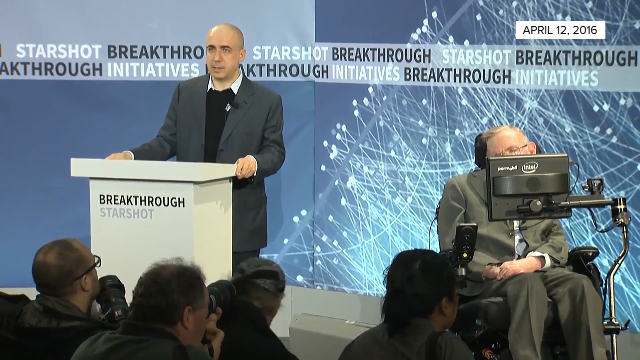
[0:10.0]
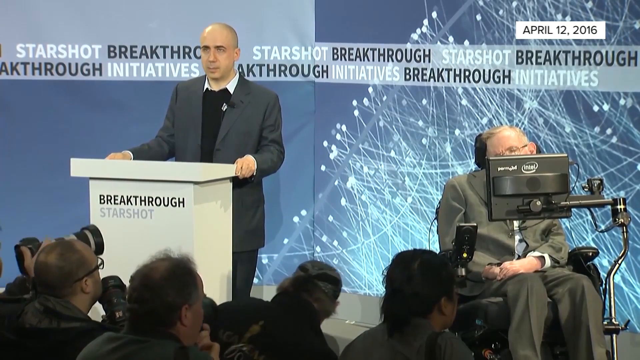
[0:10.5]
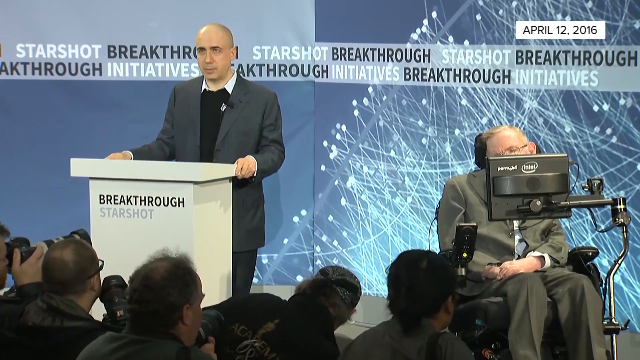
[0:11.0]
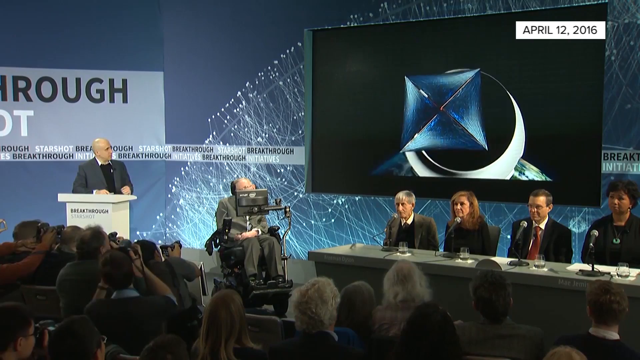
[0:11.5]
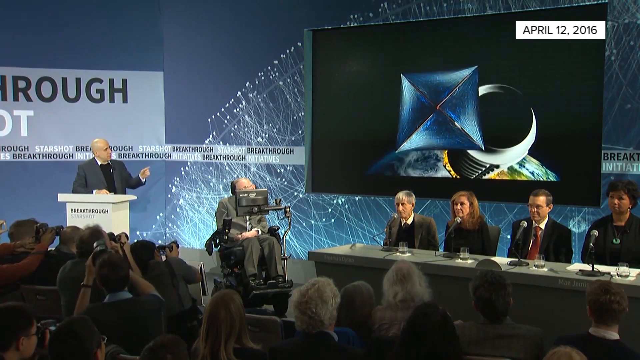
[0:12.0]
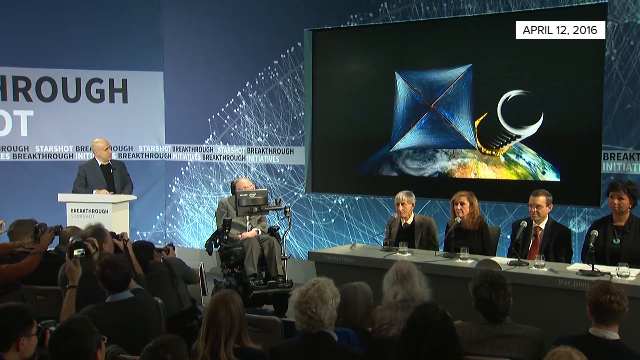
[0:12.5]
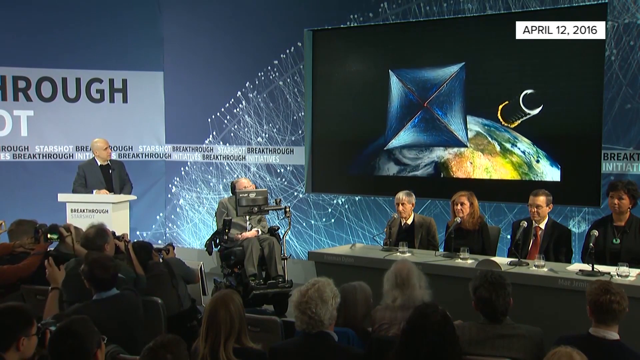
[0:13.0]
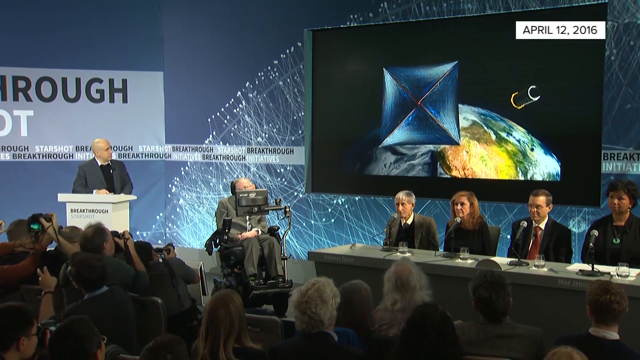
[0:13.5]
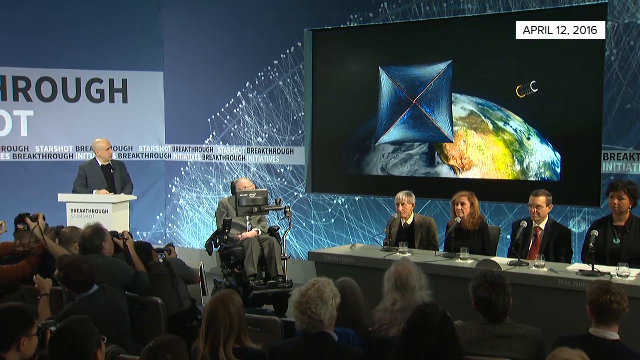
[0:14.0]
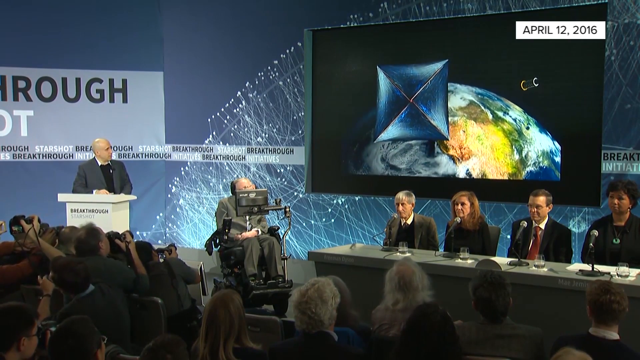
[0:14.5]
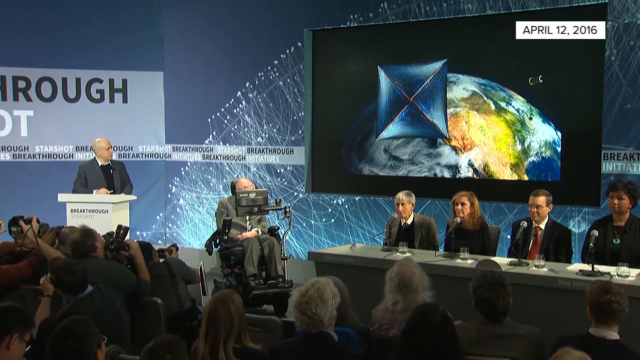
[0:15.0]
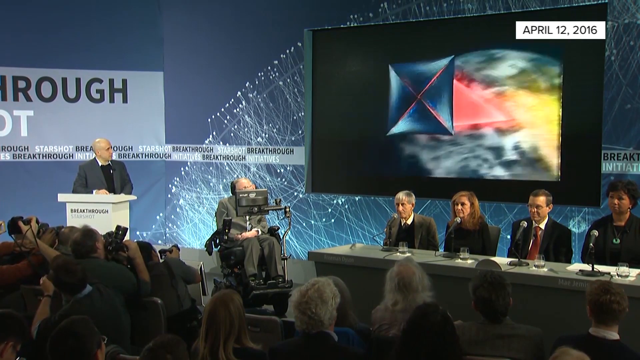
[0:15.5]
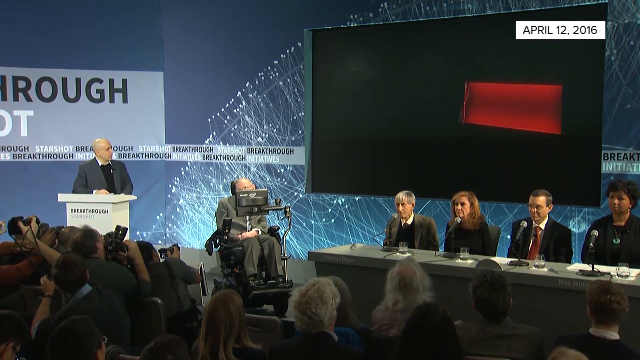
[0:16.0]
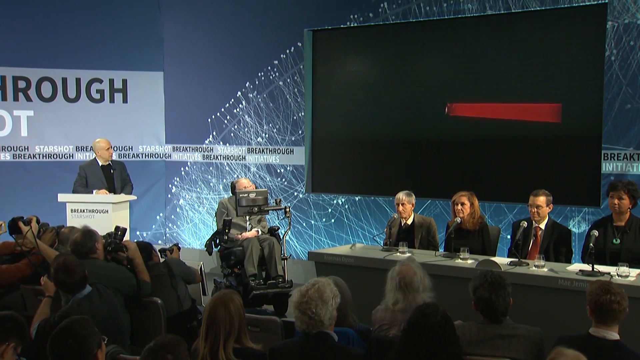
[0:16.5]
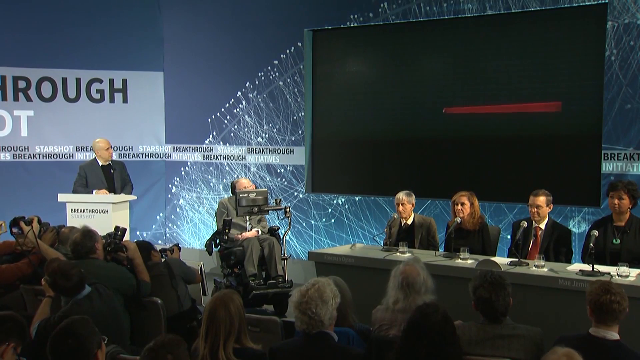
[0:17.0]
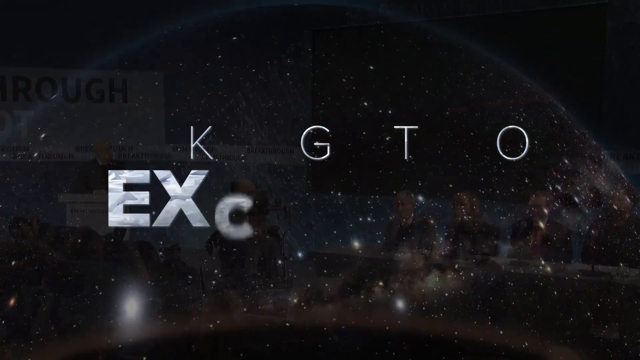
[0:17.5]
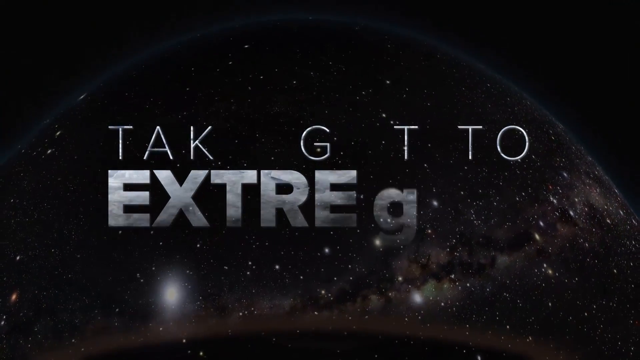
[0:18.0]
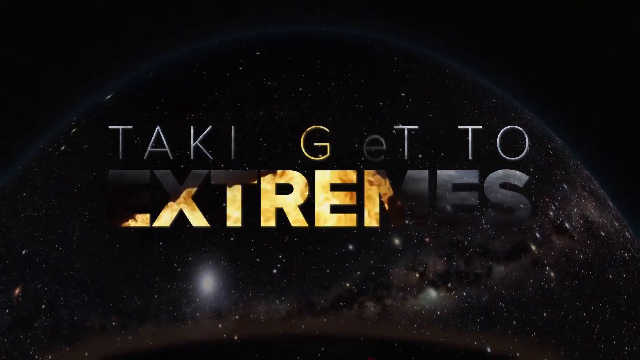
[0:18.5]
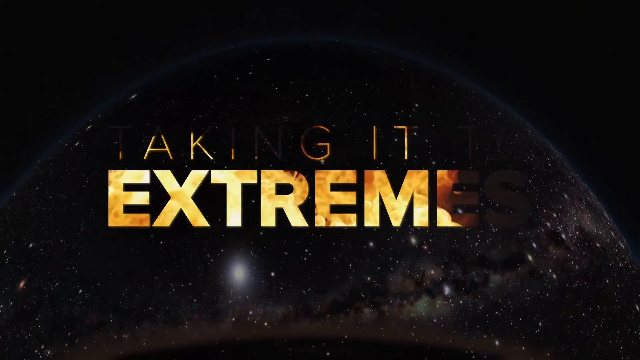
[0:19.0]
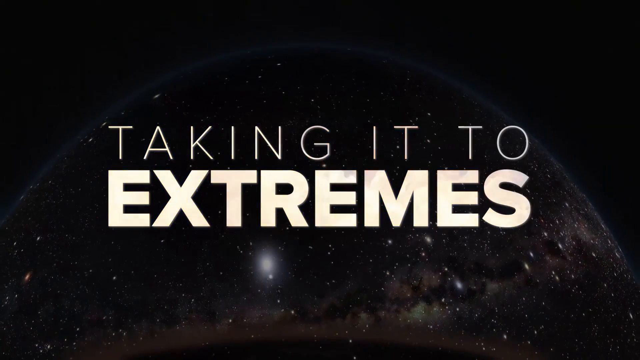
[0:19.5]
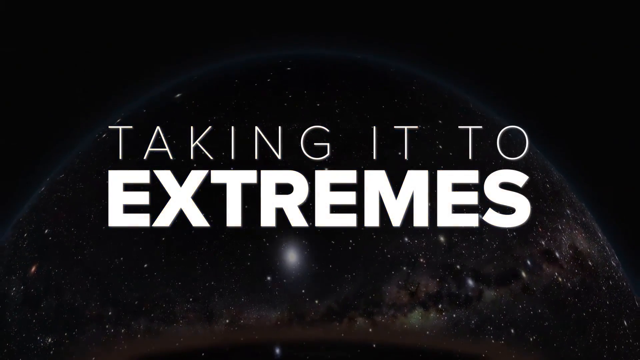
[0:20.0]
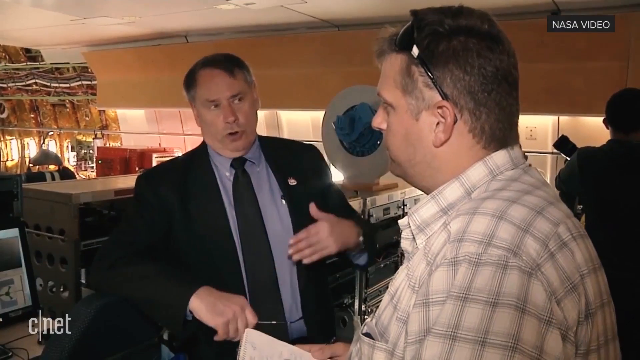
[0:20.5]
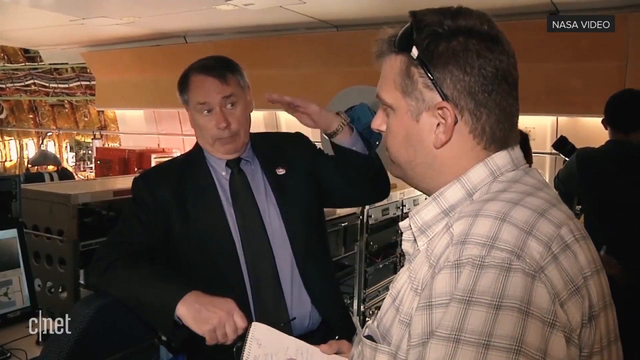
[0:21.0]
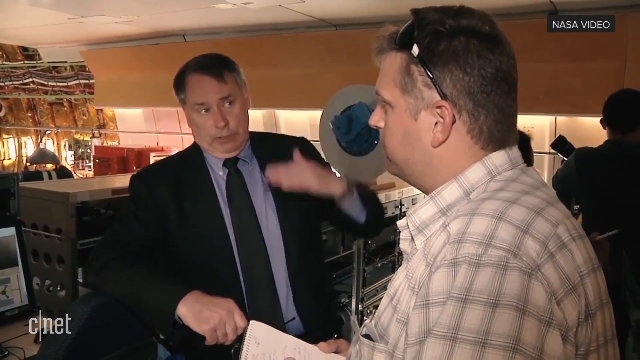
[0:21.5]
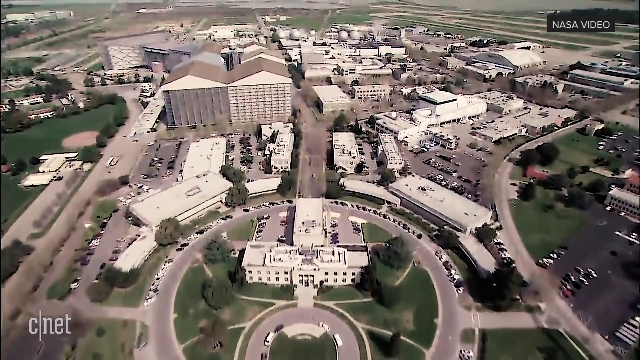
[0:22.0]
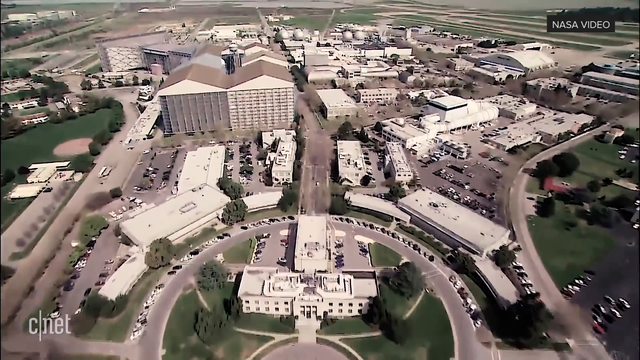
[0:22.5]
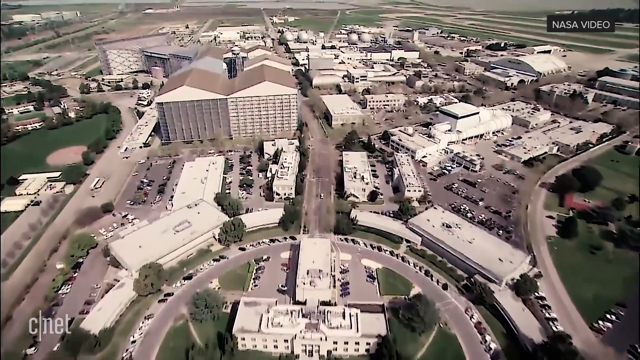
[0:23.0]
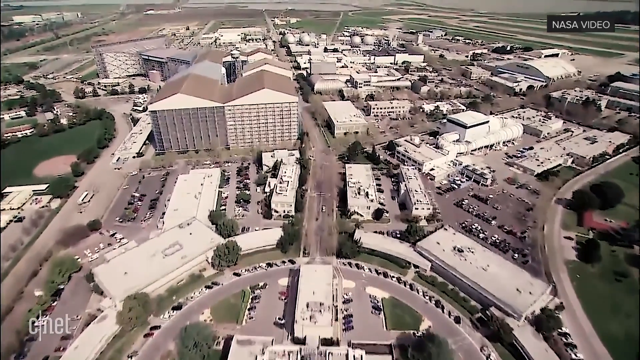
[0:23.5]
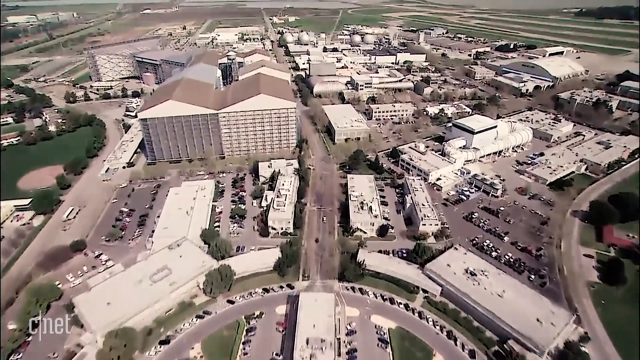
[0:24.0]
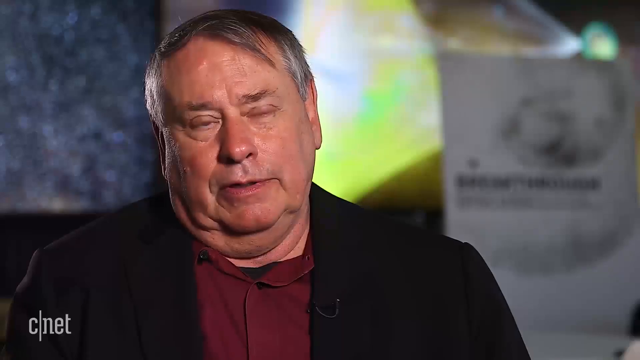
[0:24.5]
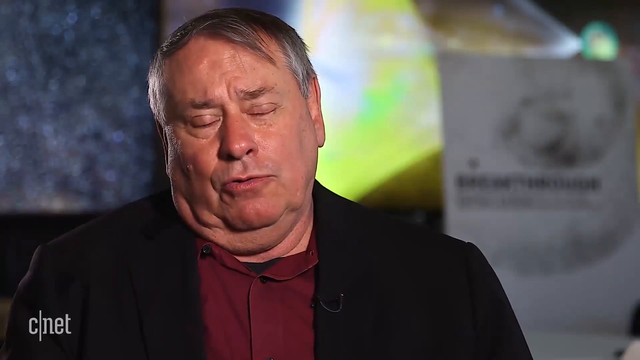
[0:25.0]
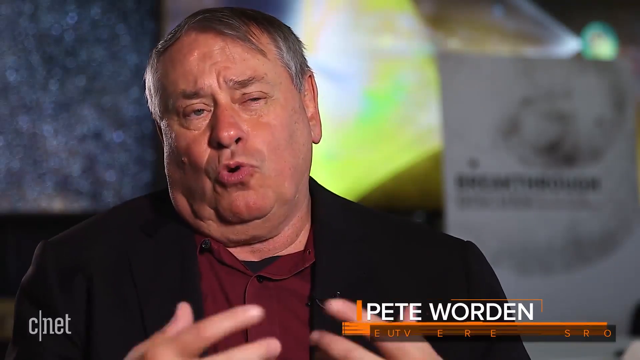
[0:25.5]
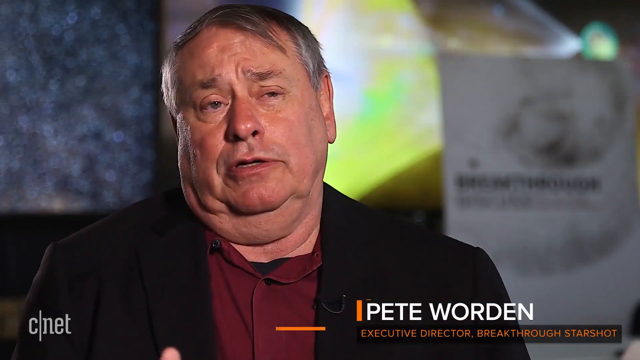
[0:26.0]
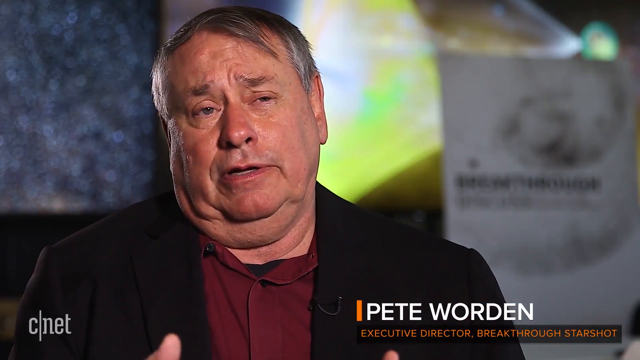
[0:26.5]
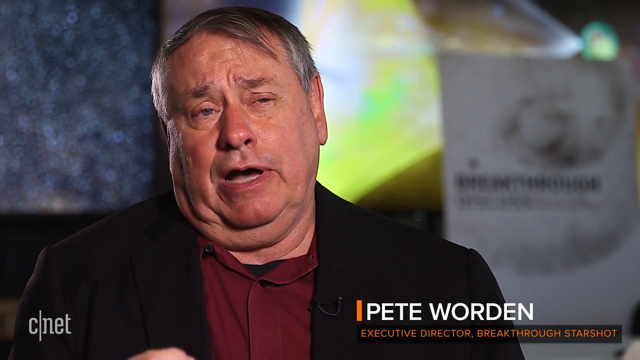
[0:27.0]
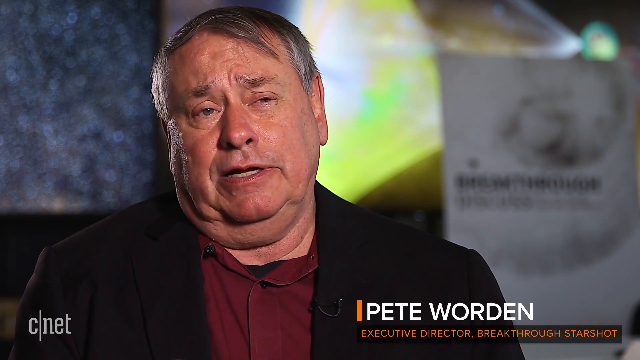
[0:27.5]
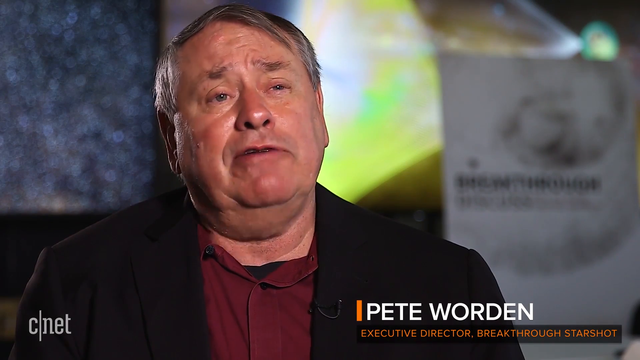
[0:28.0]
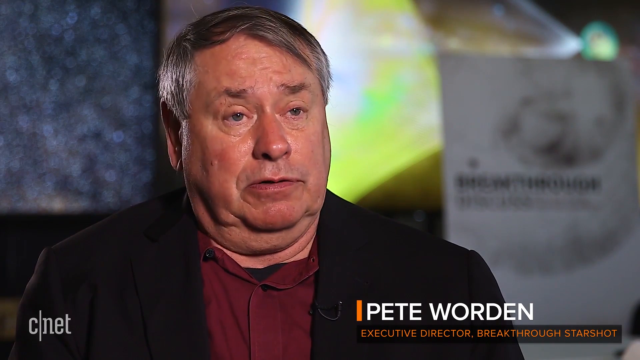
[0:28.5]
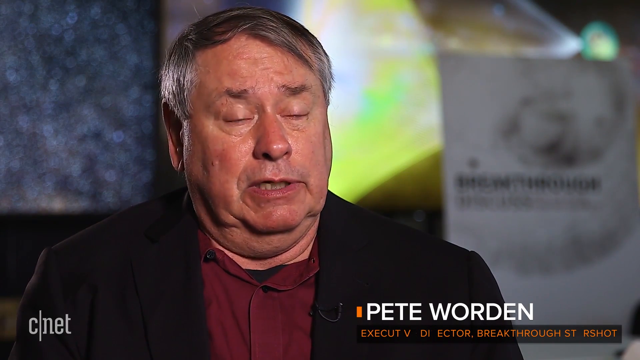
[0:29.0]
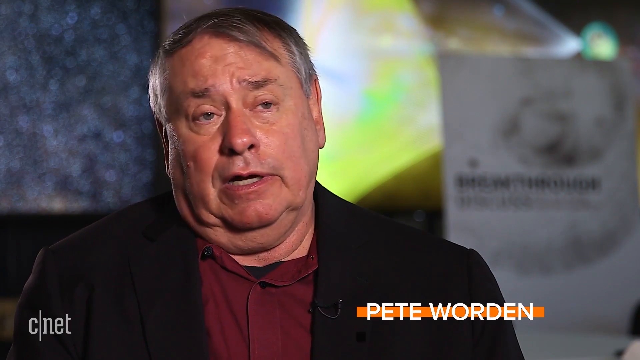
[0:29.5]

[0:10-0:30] The man on the left gives the main presentation, standing behind a podium. The front of the podium reads "Breakthrough Starshot," apparently the company or project name. At the top right, a date reads "April 12, 2016." Behind the people speaking, a presentation or video animation plays on the projector, seemingly of the planet Earth, with something shooting from Earth into space; it is unclear what it is, but it looks kind of like a square with a red trail behind it, almost as if something very large had been shot into space. Then a title screen reads "taking it to the extremes," and a man named Pete Ward is introduced.